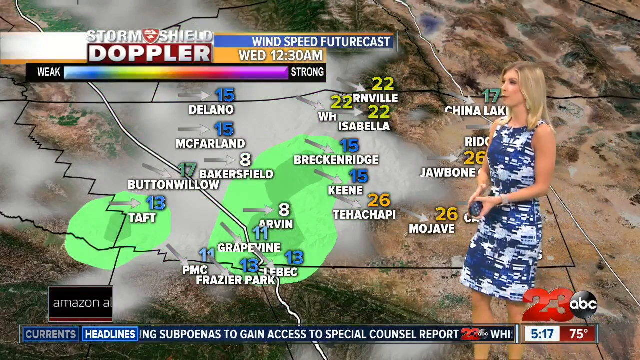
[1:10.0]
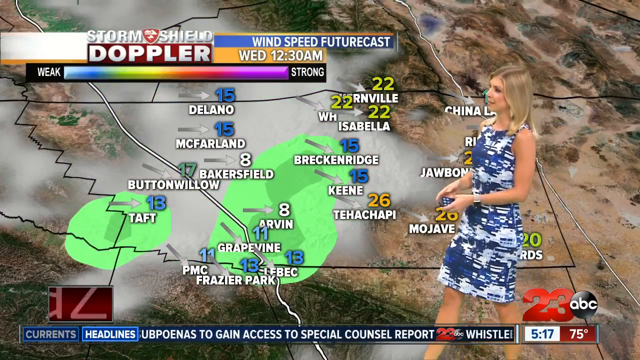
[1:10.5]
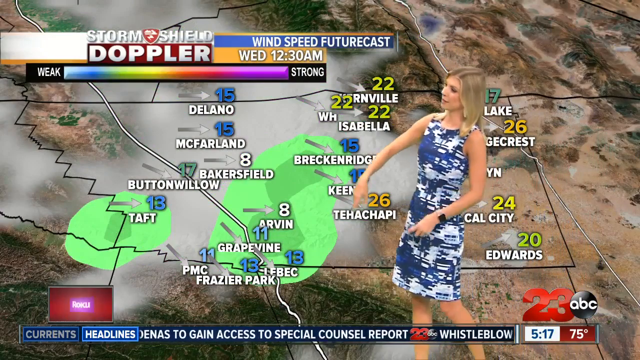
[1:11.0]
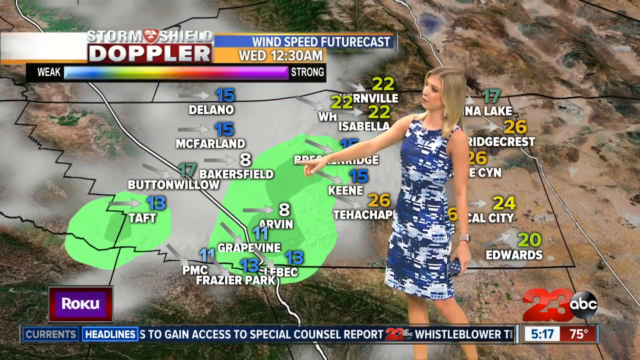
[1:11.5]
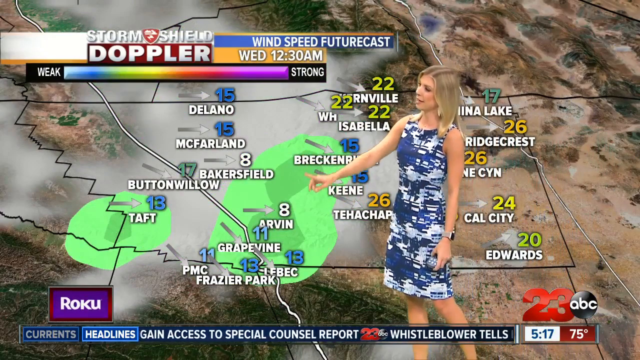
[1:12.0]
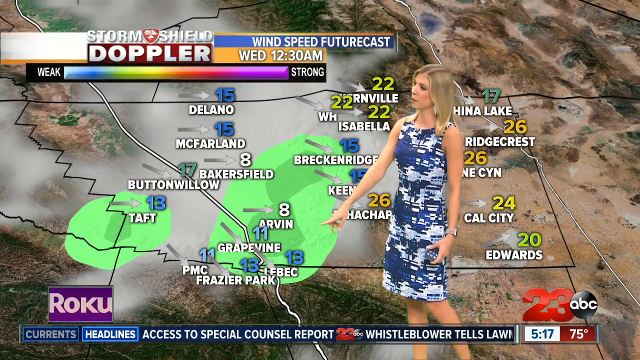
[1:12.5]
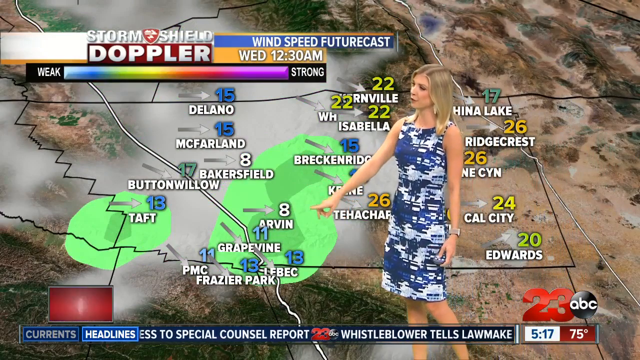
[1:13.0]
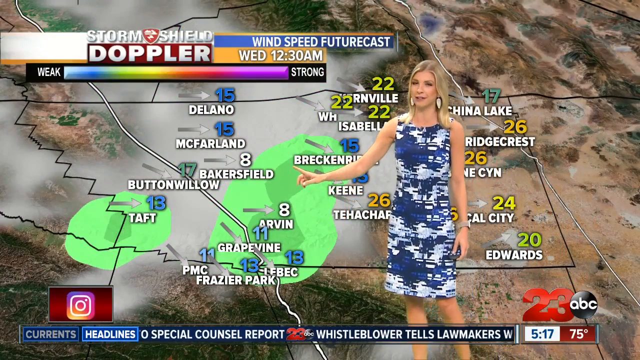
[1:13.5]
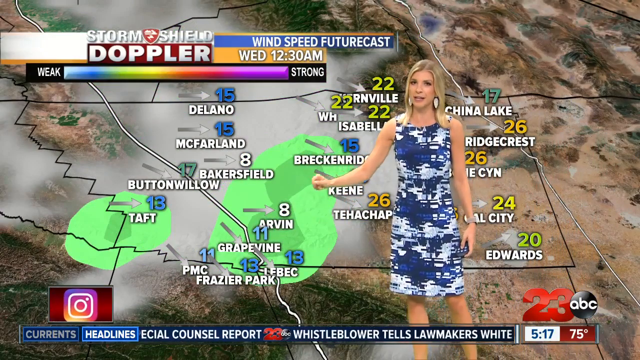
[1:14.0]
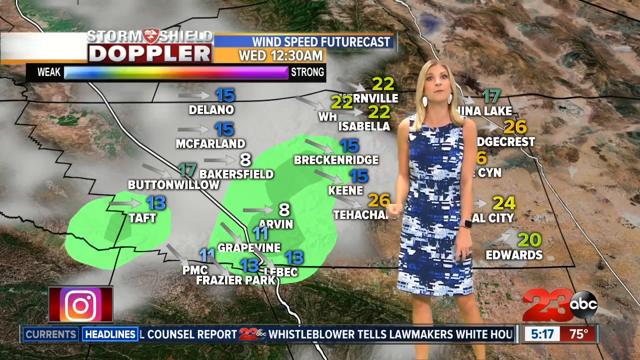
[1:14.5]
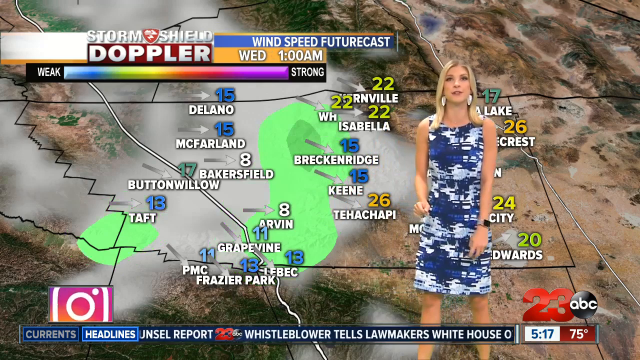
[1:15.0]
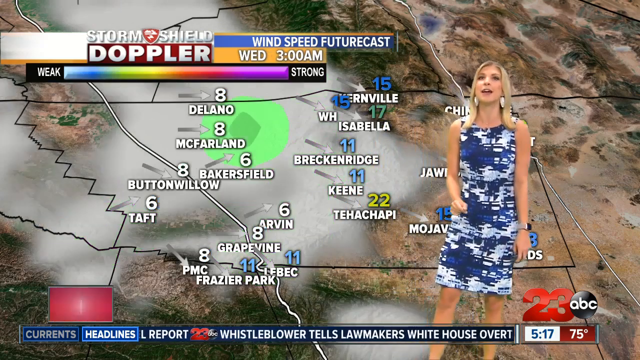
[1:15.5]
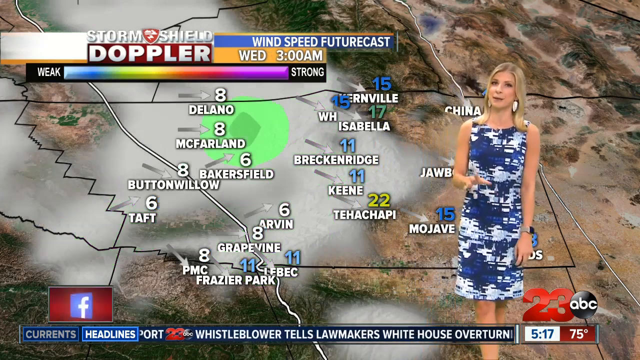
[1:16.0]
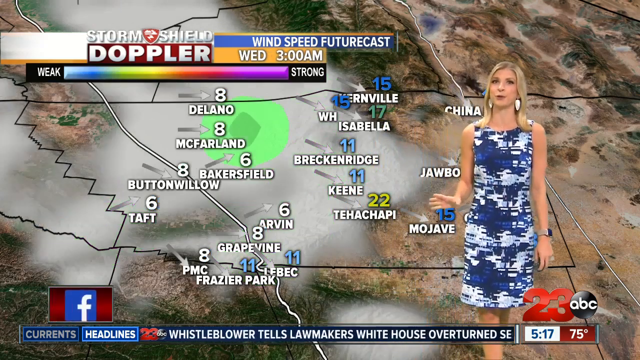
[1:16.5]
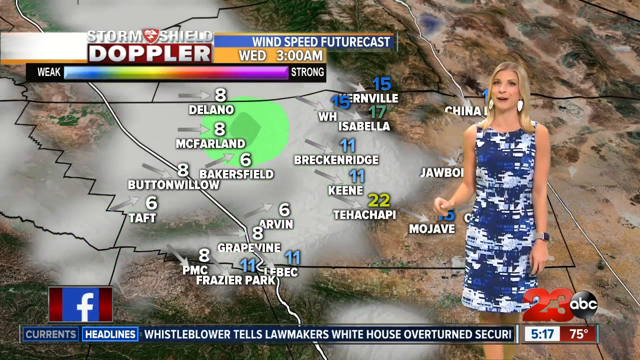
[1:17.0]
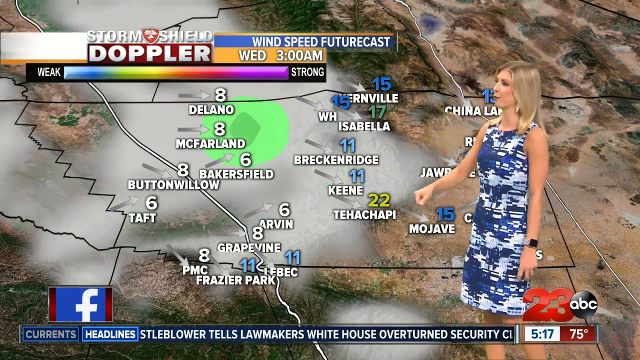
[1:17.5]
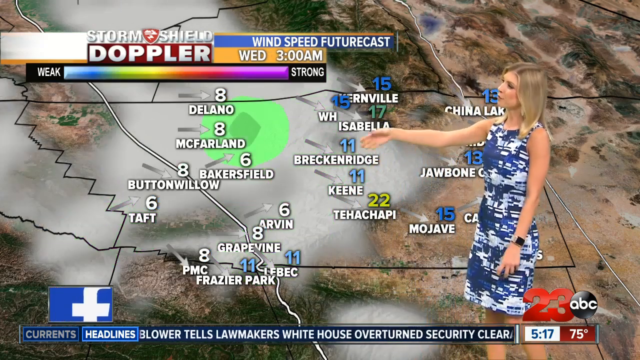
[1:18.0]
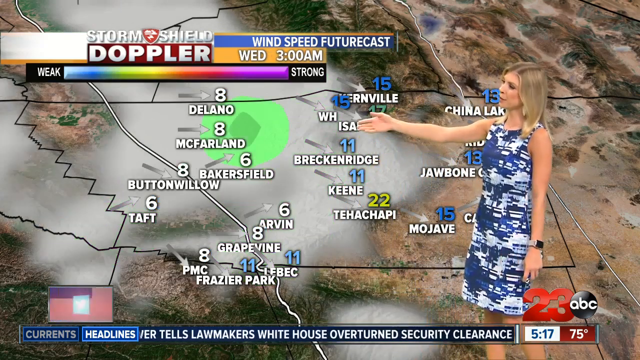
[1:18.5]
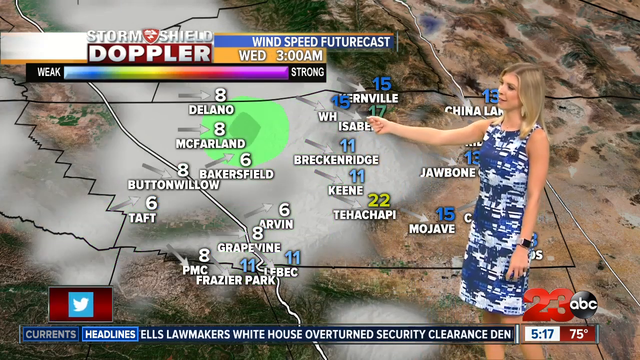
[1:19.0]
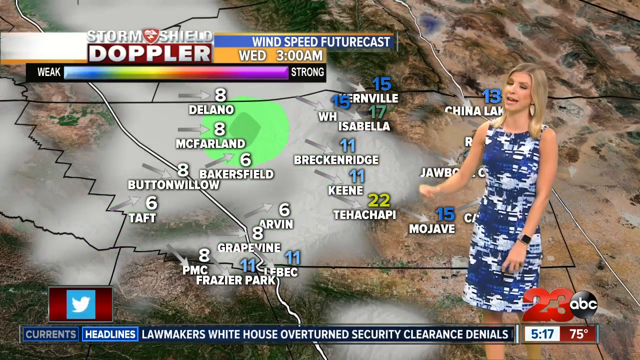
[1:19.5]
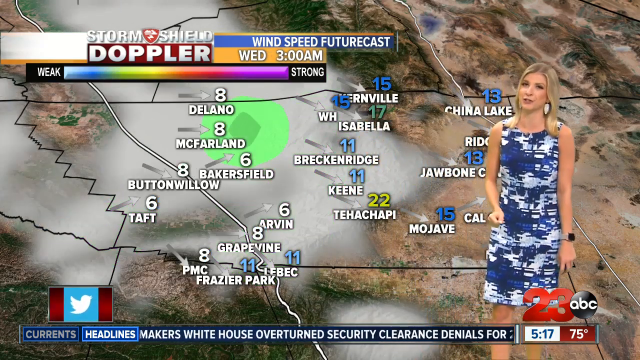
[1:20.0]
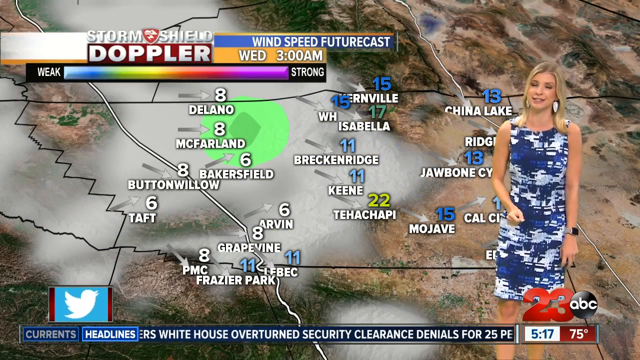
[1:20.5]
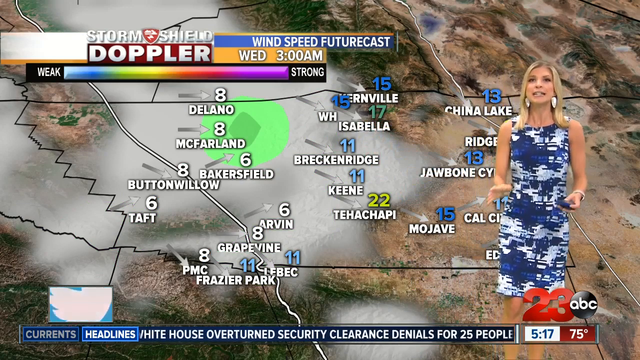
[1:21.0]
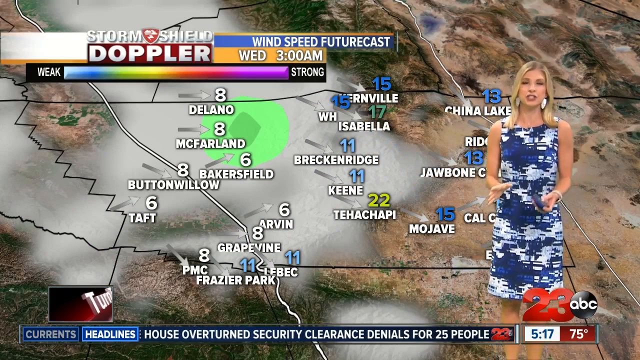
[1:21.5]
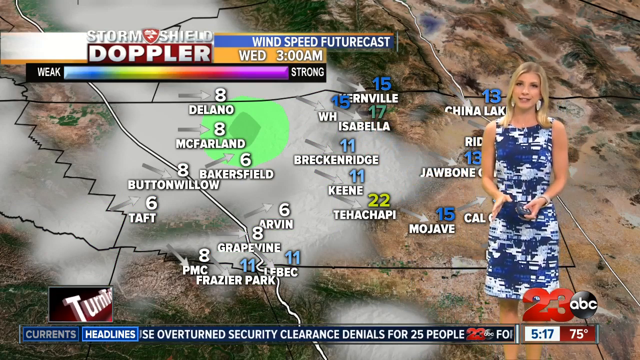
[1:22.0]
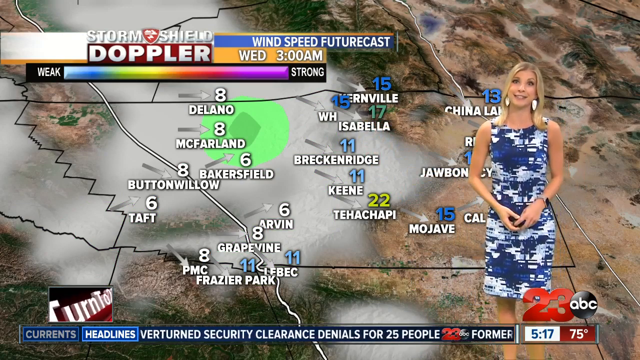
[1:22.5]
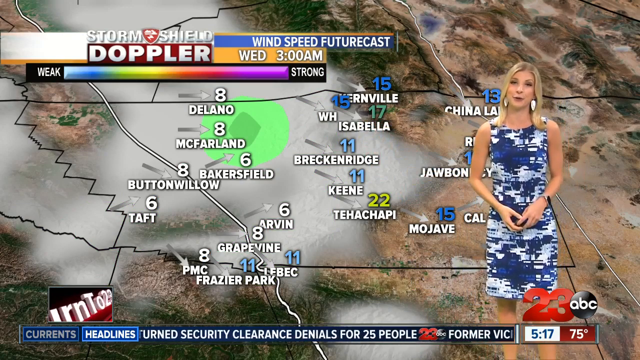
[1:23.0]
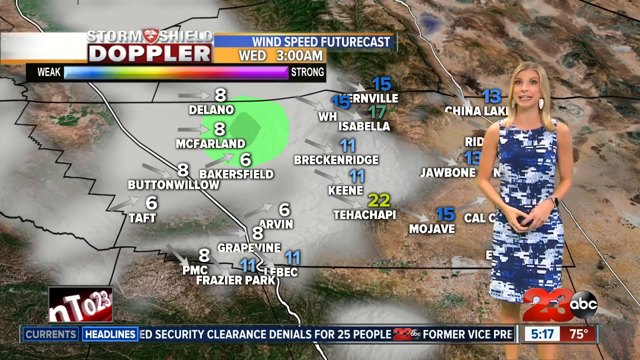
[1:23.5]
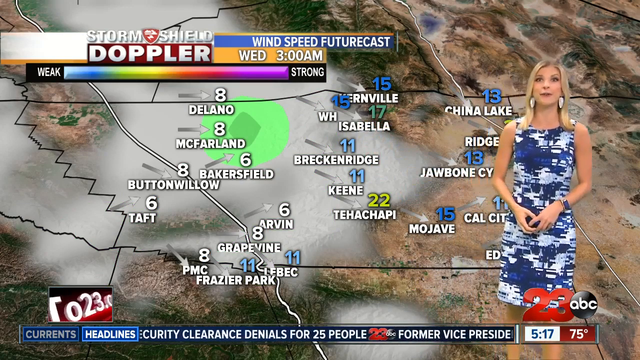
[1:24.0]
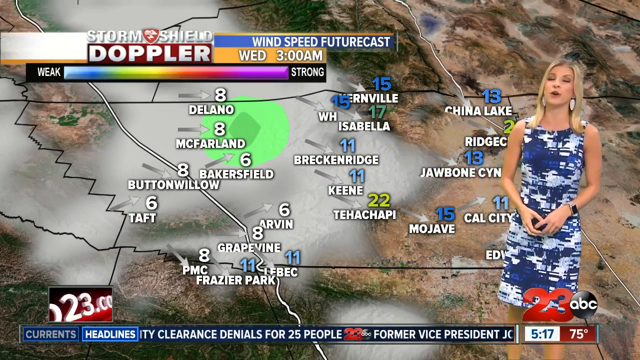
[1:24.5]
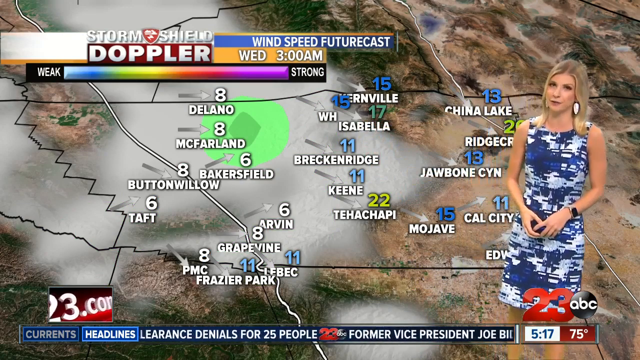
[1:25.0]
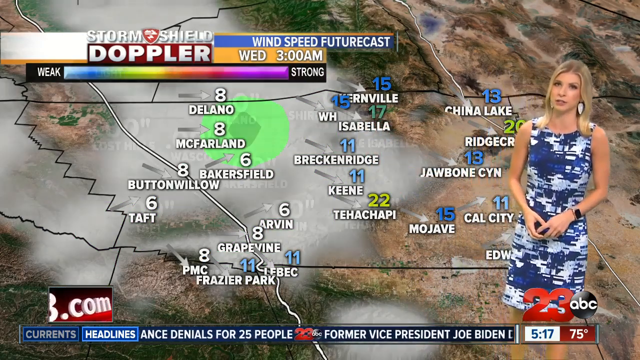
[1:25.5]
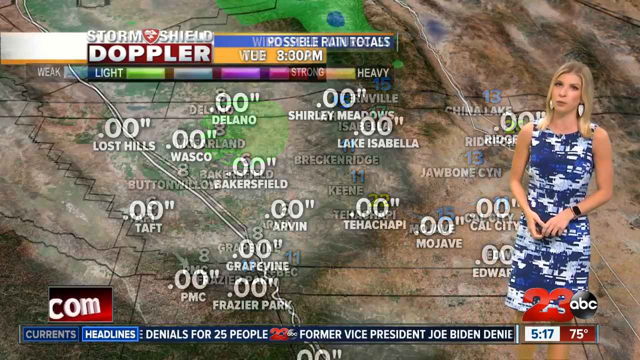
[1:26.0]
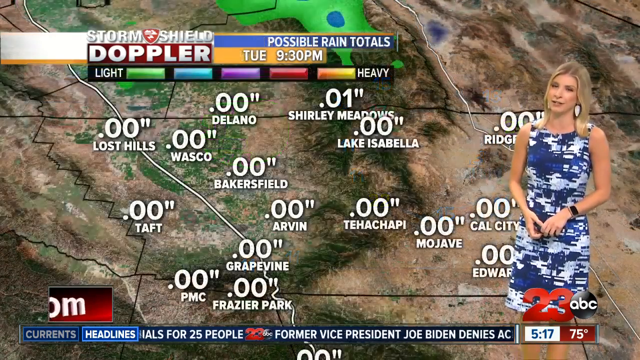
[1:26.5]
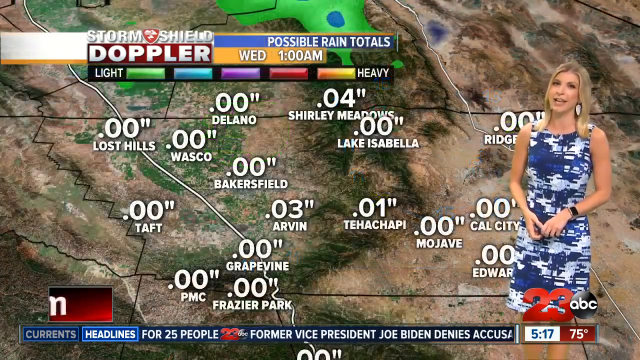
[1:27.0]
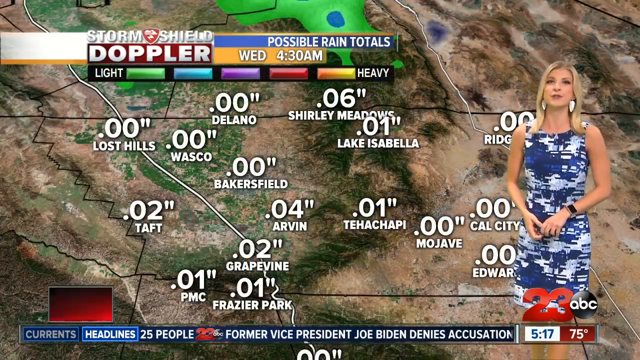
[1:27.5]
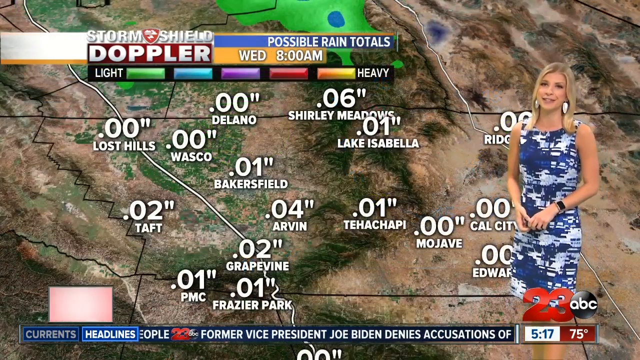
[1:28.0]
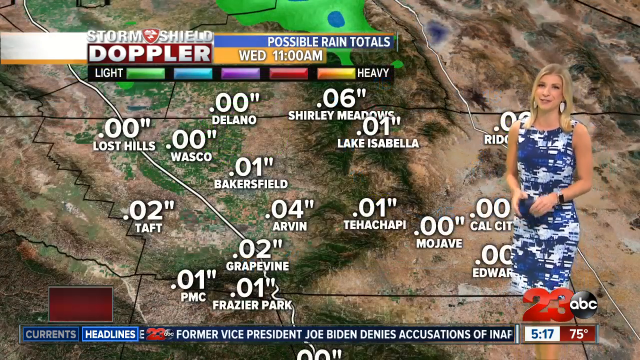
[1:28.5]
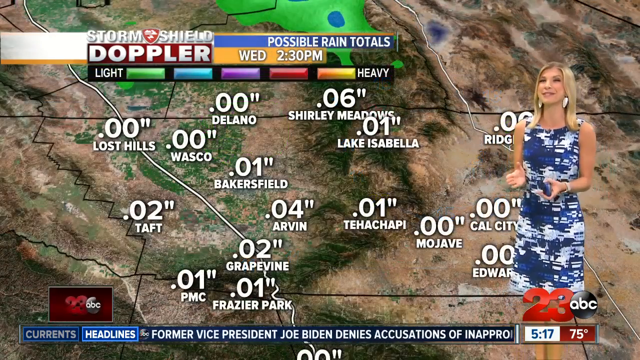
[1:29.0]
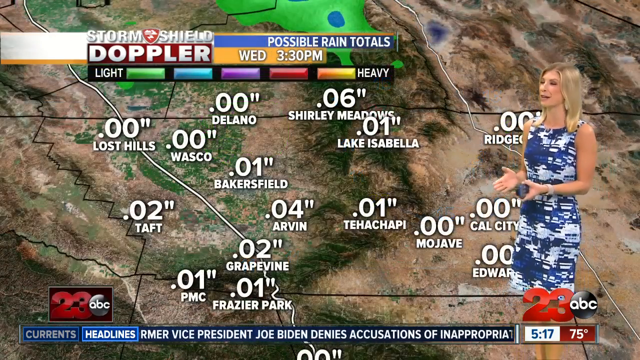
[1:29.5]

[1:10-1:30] She is back in front of a map that looks like a topographic map but also has some of the shading from the earlier legend, with green spaces. Taft, Fraser Park, Grapevine, Arvin and Breckenridge are on it. It has numbers: Mojave shows 26, McFarland 15 and Bakersfield 8, and the numbers are color-coded, some light blue, some green, some yellow. The map somewhat moves, and the green space is now over D'Alello and McFarland. There is a kind of mist, and there are arrows that may be pointing in the direction of the wind. The view then changes to a map of the same area that apparently shows rainfall: Lost Hills, Taft, Bakersfield, D'Alello and Mojave are not expected to get any rain, while Shirley Meadows shows 0.04 and Arvin 0.03. A legend at the top runs from light to heavy.